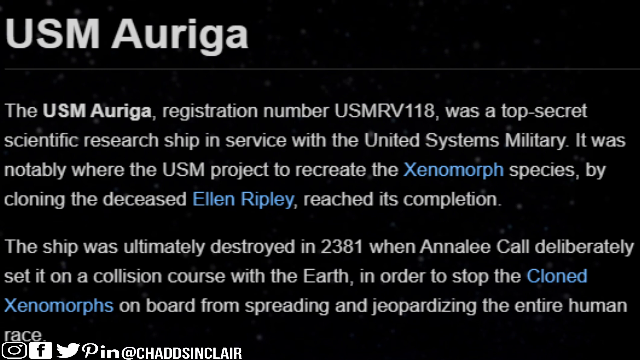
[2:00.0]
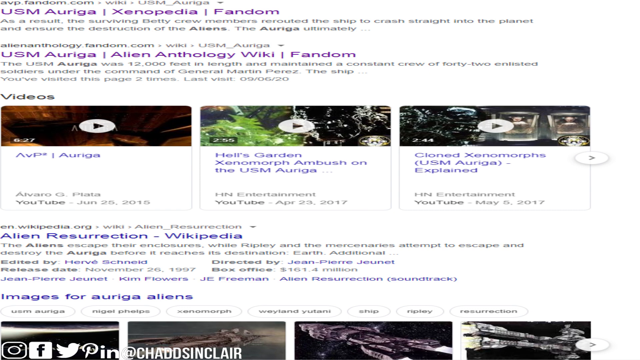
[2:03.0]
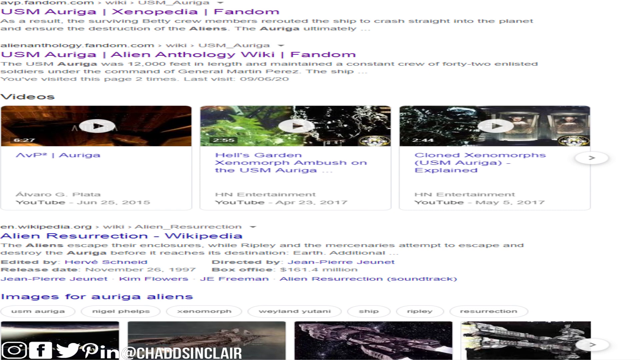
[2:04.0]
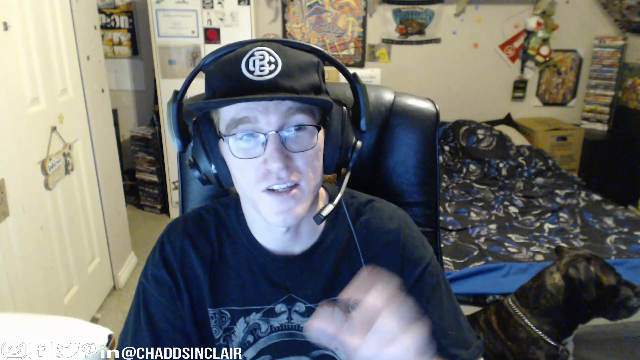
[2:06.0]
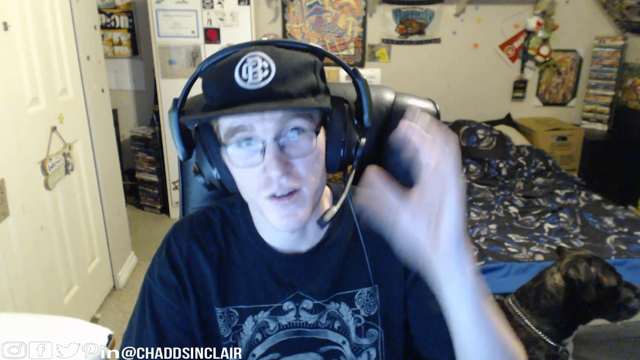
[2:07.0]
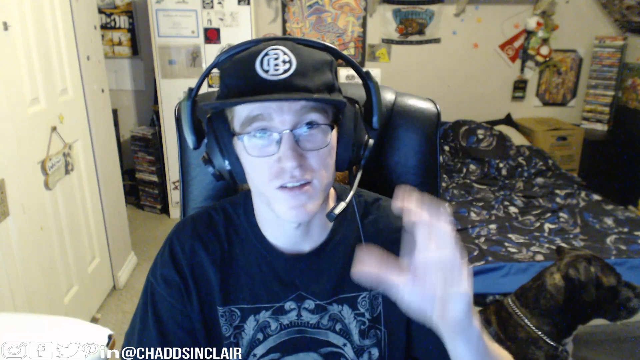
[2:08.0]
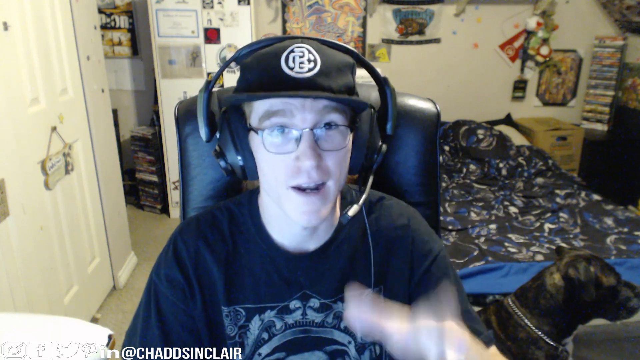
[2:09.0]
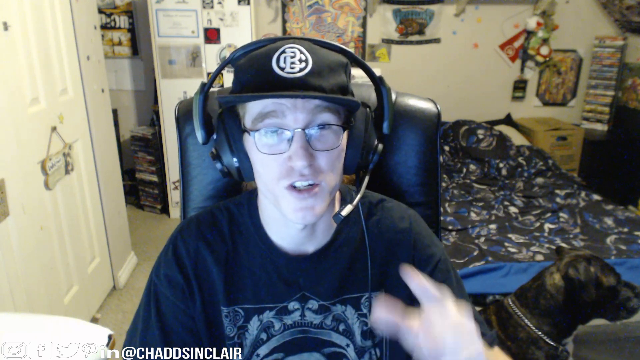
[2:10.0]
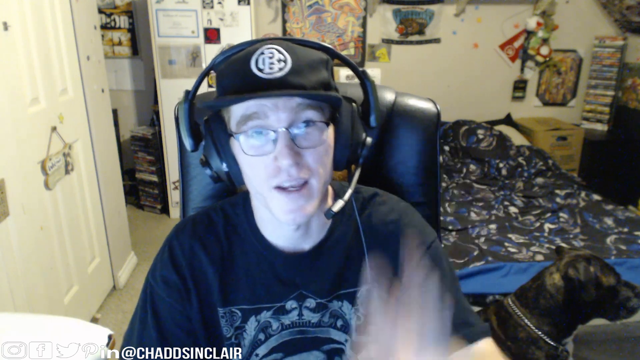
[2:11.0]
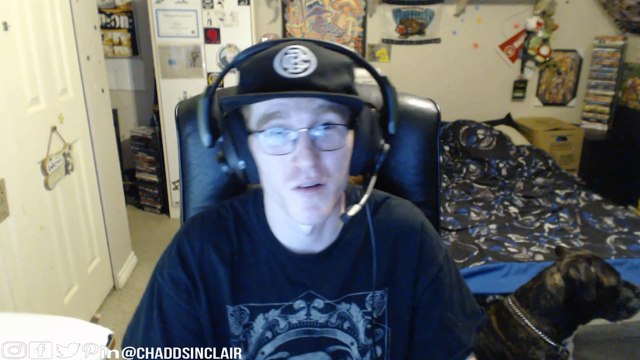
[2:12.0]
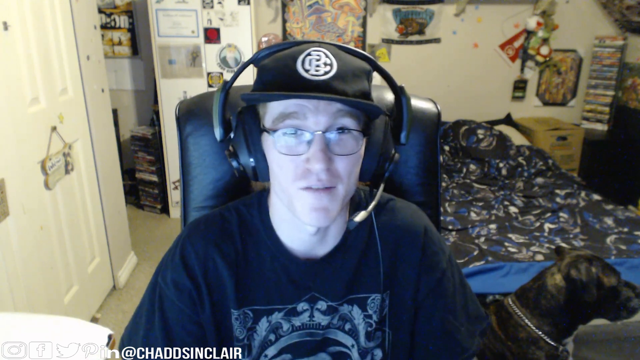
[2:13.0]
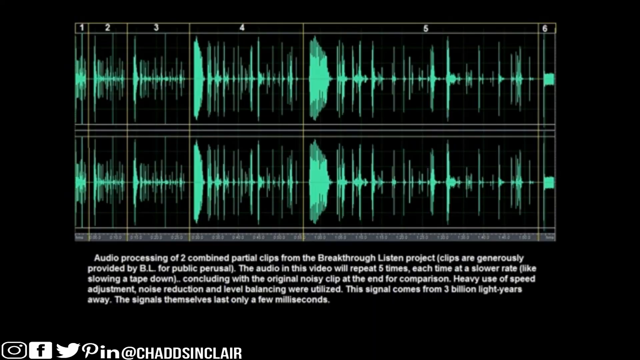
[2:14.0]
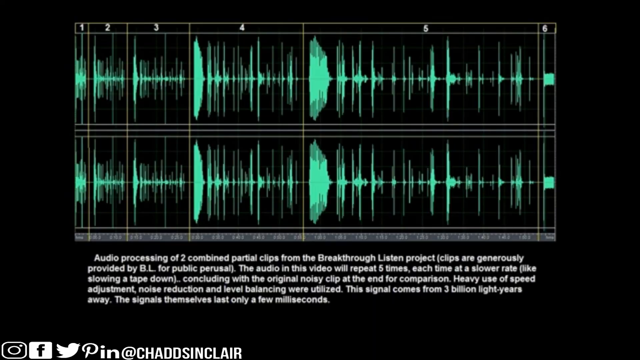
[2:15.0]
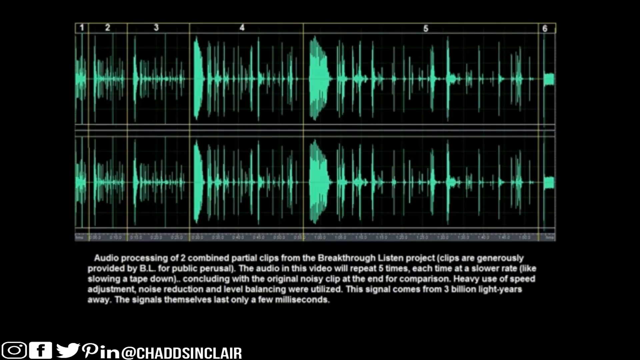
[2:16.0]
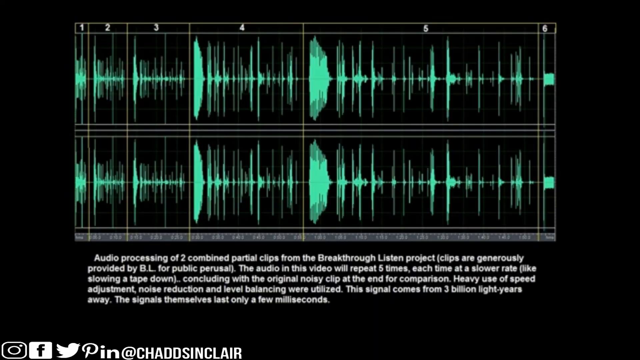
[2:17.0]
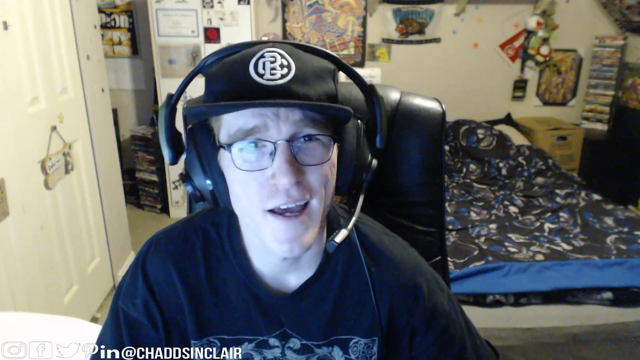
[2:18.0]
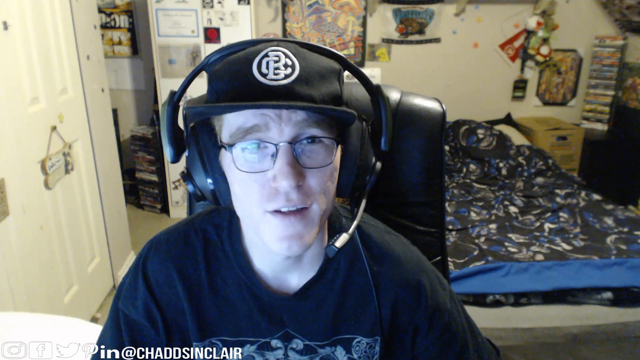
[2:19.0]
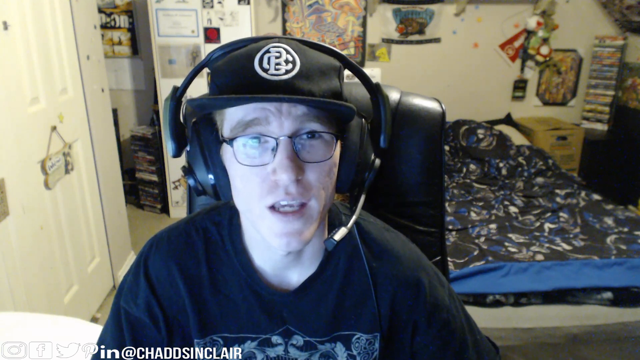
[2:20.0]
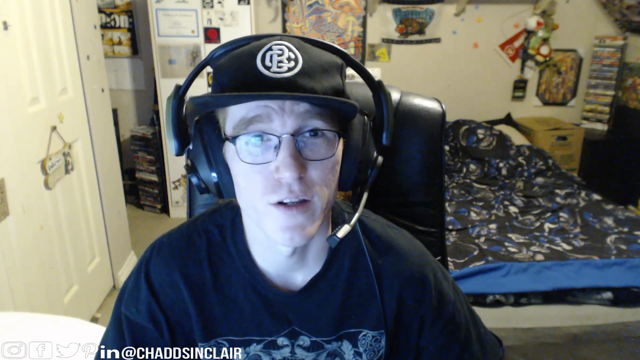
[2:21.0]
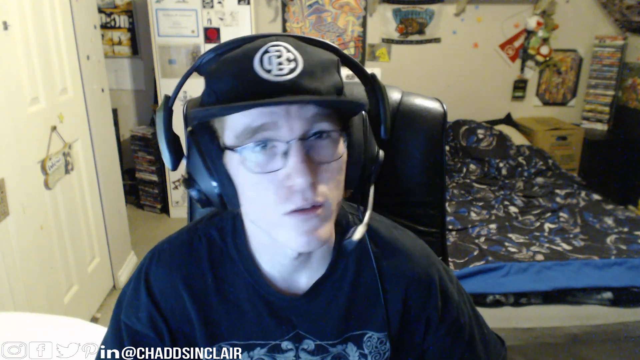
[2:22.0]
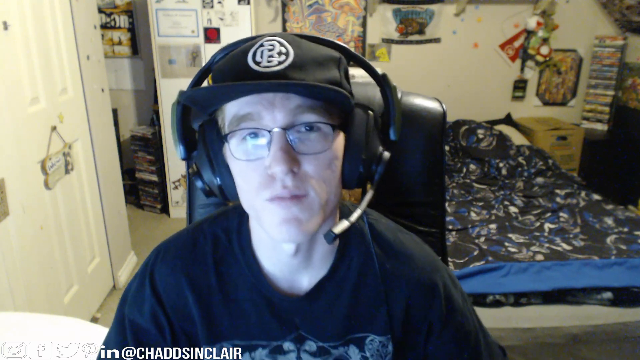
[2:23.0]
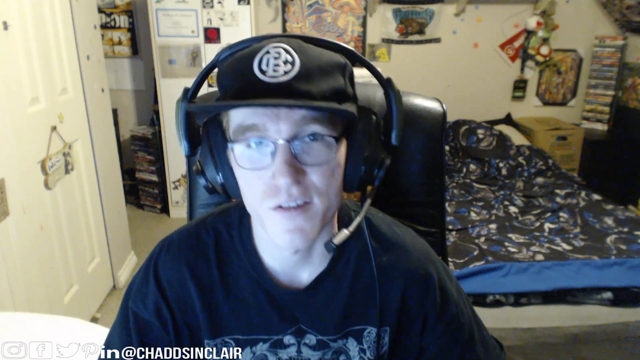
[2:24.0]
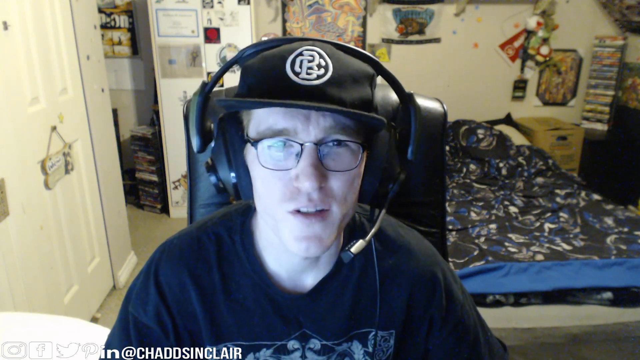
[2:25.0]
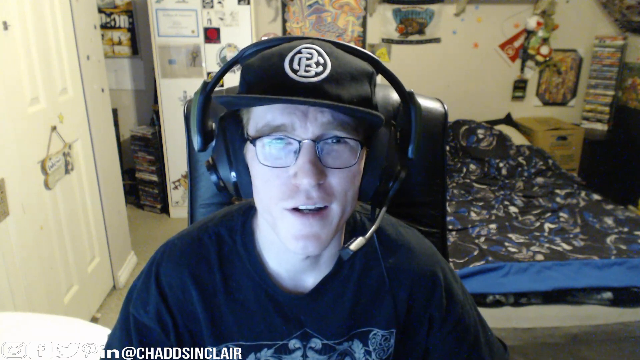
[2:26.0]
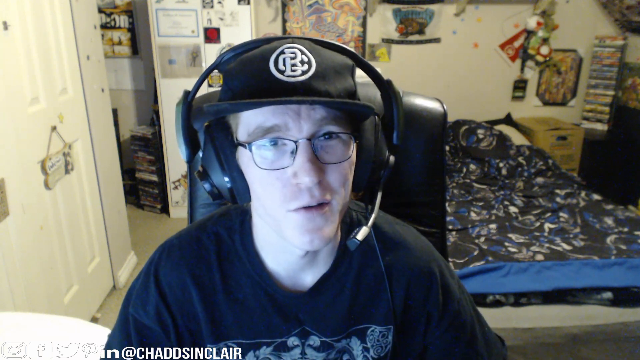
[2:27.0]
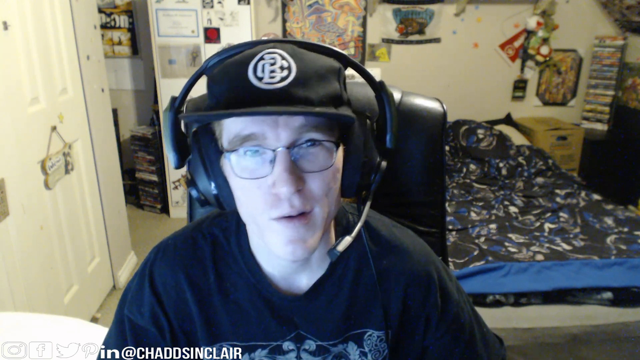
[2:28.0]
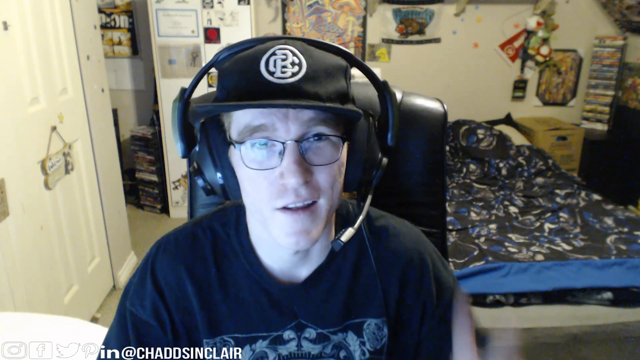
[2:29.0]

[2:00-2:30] On a black background, white all-caps text in the upper left corner reads "USM", followed by "Auriga" not in all caps, with a thin white border running across beneath it. Below, after some space, "the USA Auriga" appears in bold, followed by regular text: "The registration number is USM-RV-118, was a top secret scientific research ship in service with the United States military. It was notably where the USM project to recreate xenomorph species by cloning the deceased Ellen Ripley reached its completion. The ship was ultimately destroyed in 2381 when Anna Lee Cole deliberately set it on collision course with the earth in order to stop the cloned xenomorph on board from spreading and jeopardizing the entire human race." The video goes back to the man talking; he wears glasses with a glare because he is looking at the monitor. The two green wavelengths appear again, then the man talking again, wearing a black headset with a mic near his mouth and a black hat that may say "CBC".